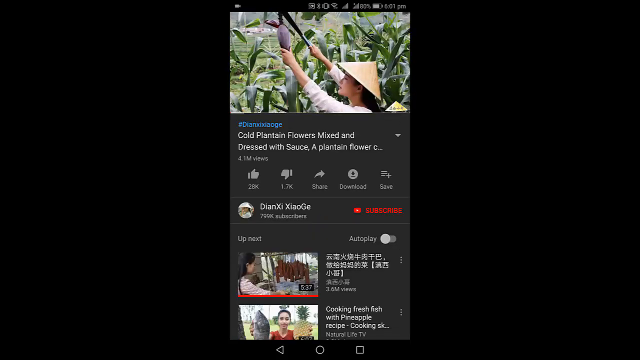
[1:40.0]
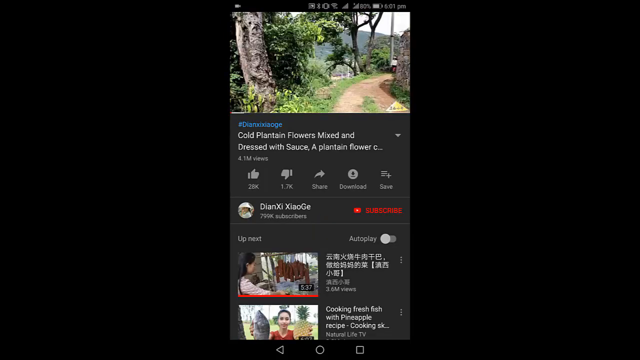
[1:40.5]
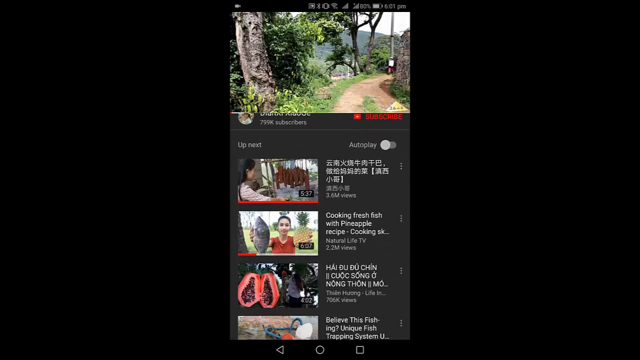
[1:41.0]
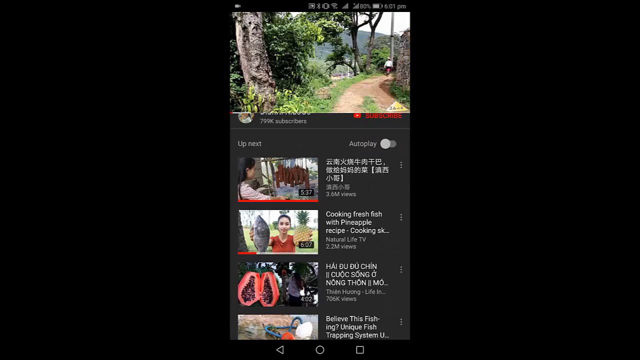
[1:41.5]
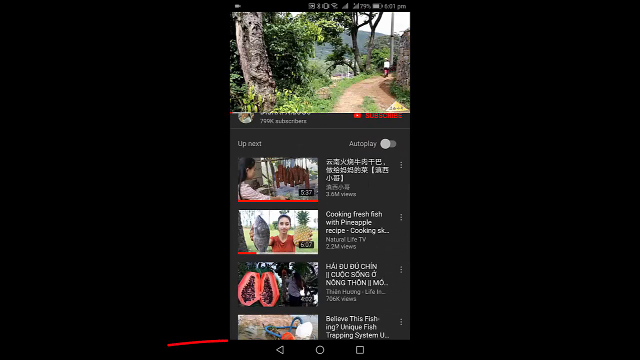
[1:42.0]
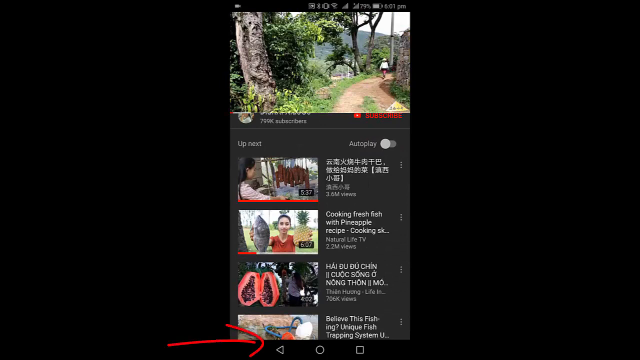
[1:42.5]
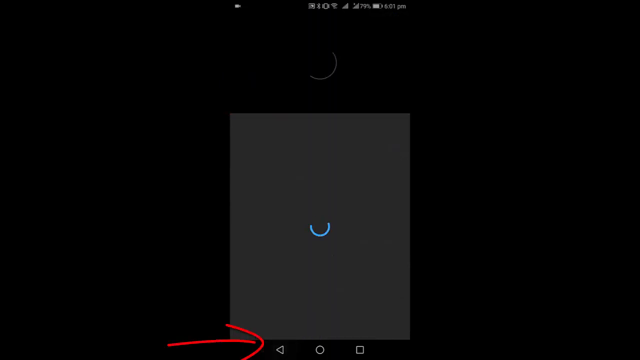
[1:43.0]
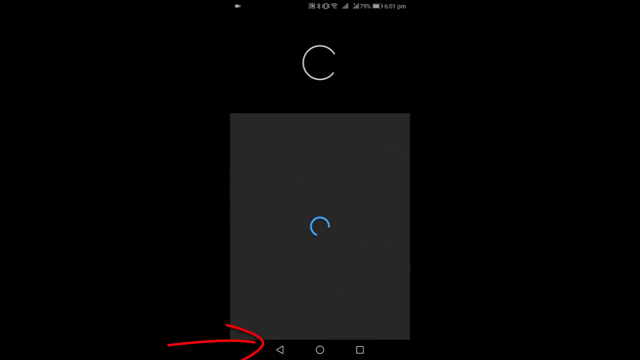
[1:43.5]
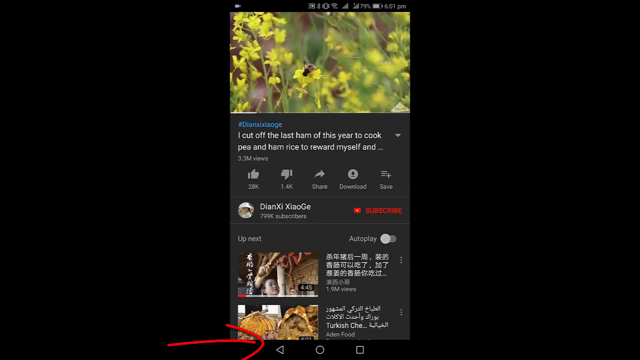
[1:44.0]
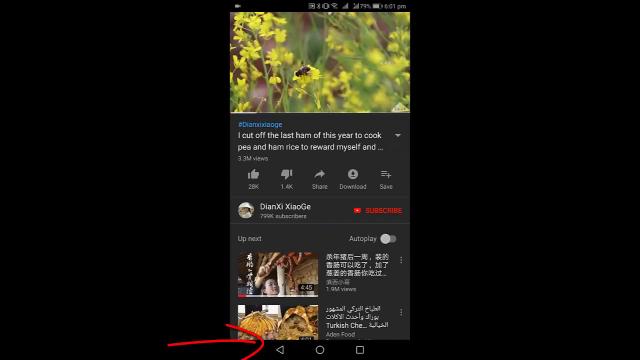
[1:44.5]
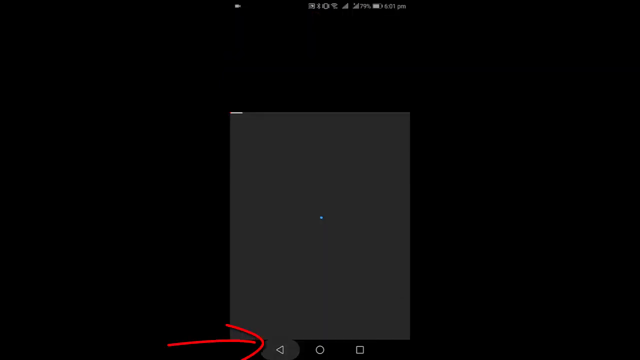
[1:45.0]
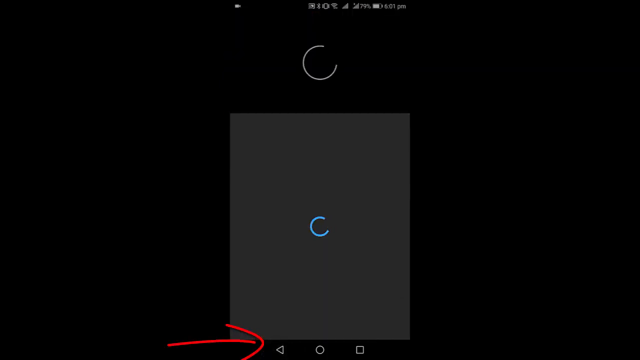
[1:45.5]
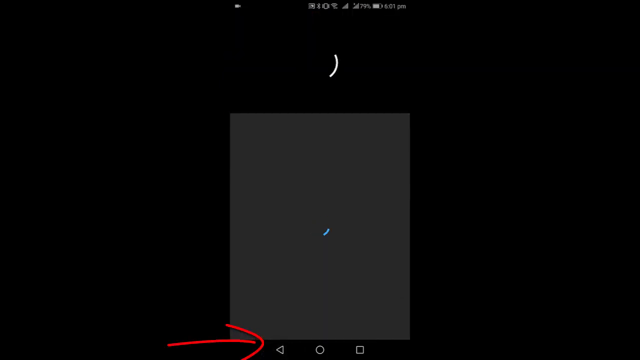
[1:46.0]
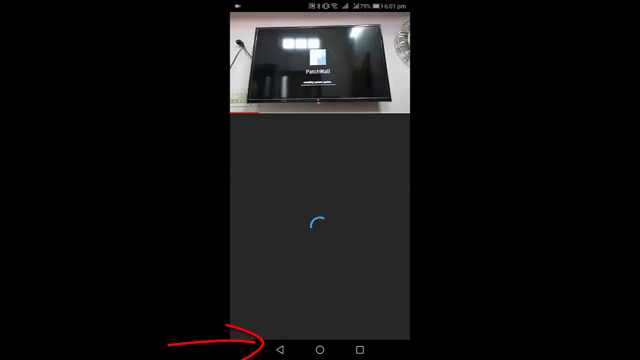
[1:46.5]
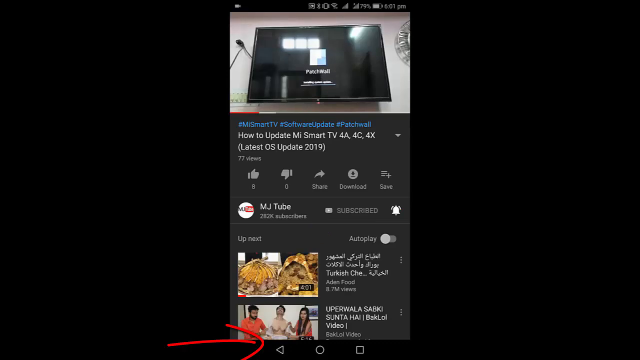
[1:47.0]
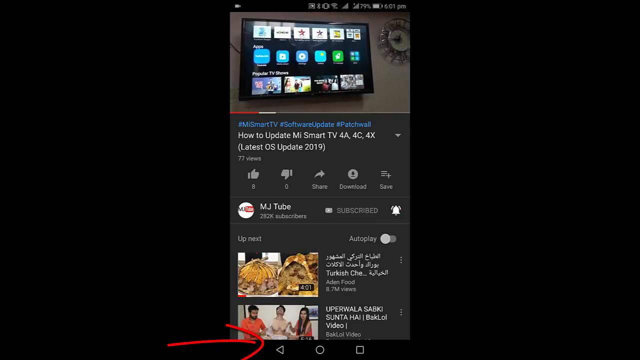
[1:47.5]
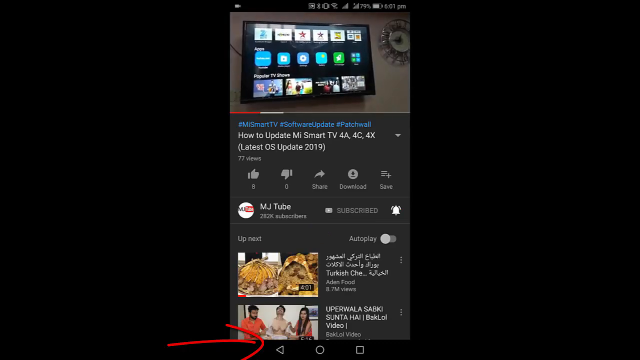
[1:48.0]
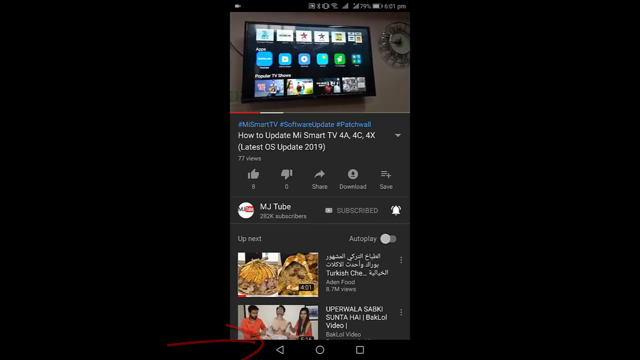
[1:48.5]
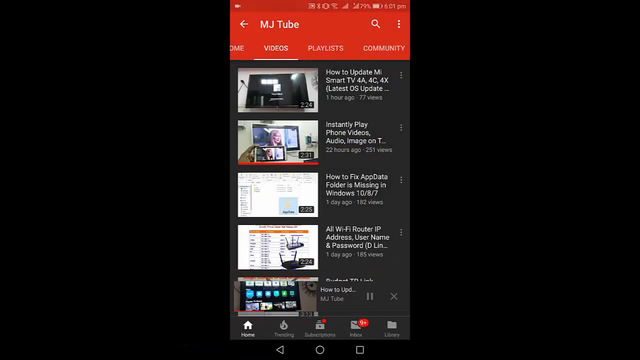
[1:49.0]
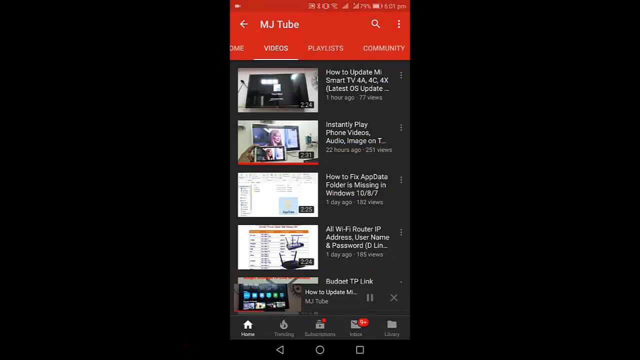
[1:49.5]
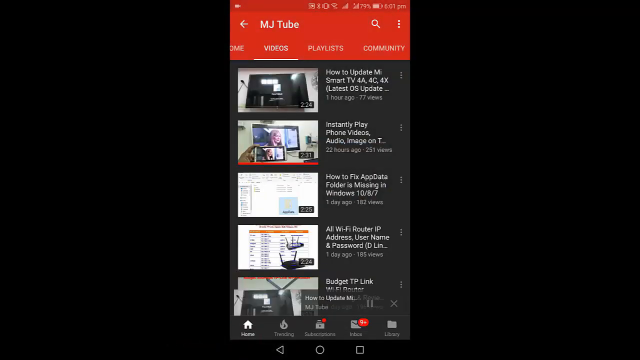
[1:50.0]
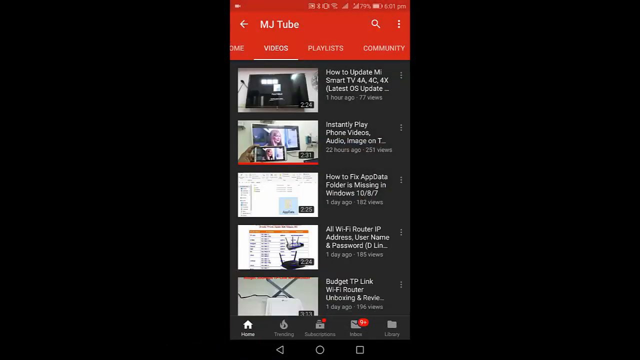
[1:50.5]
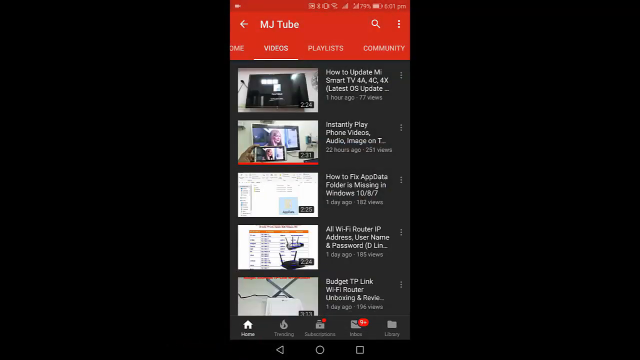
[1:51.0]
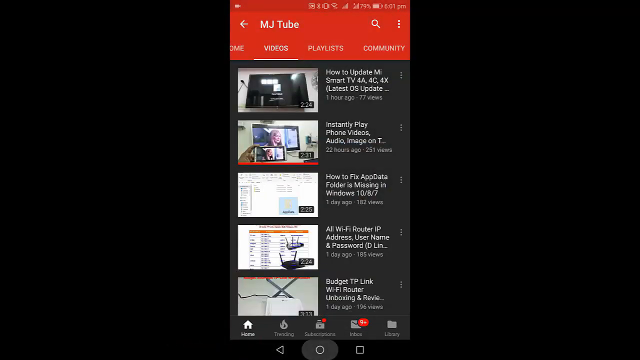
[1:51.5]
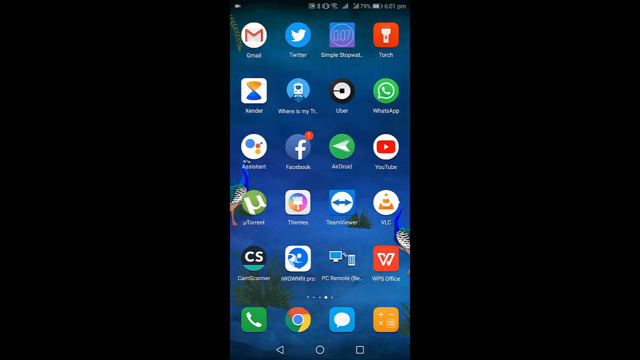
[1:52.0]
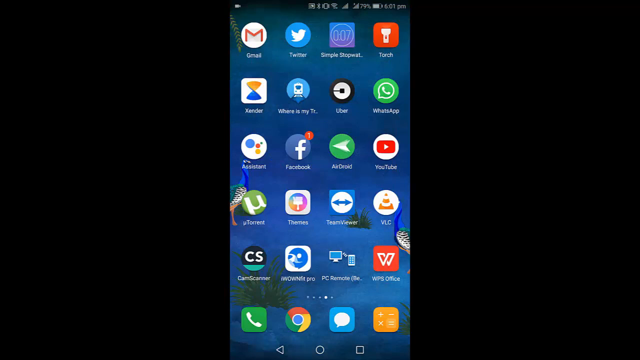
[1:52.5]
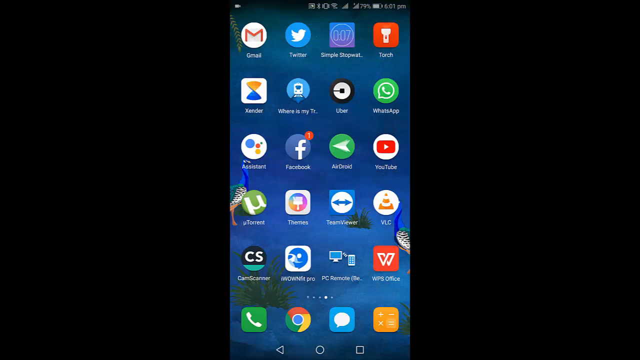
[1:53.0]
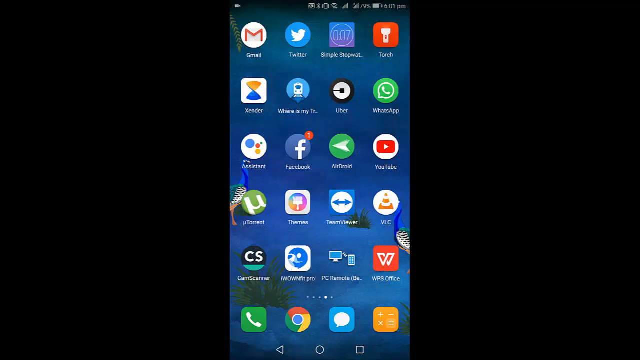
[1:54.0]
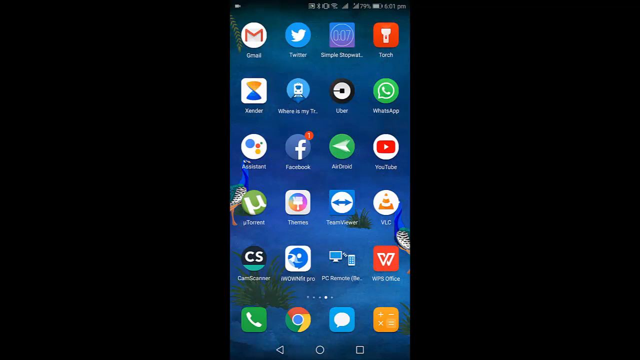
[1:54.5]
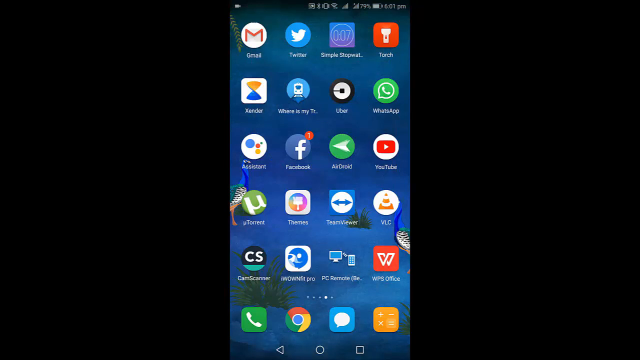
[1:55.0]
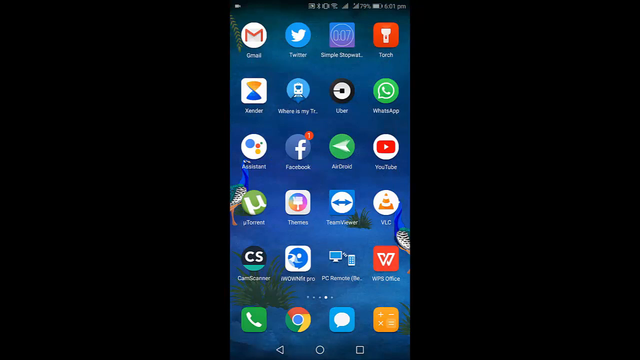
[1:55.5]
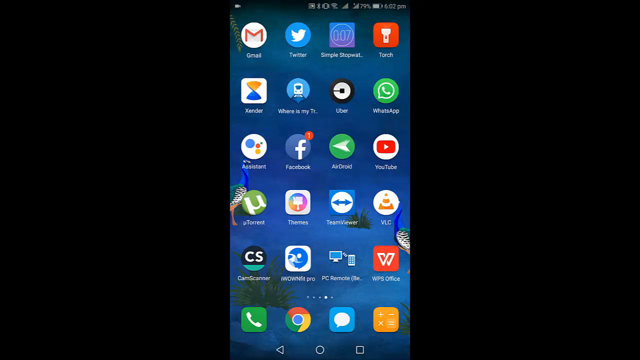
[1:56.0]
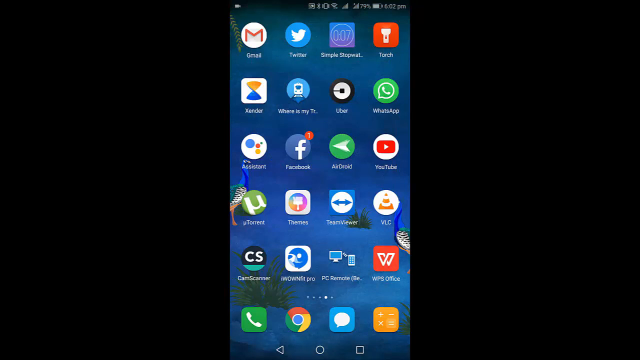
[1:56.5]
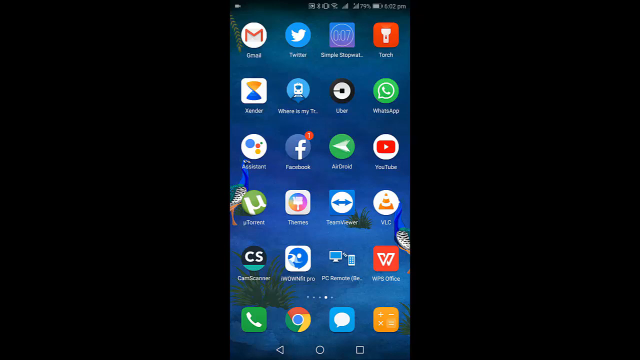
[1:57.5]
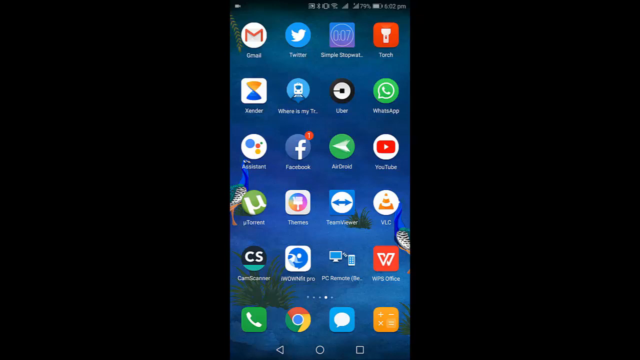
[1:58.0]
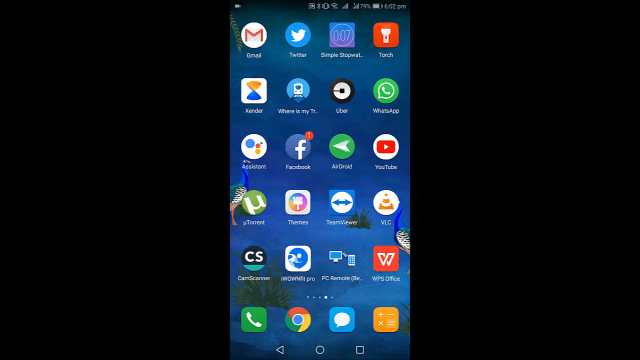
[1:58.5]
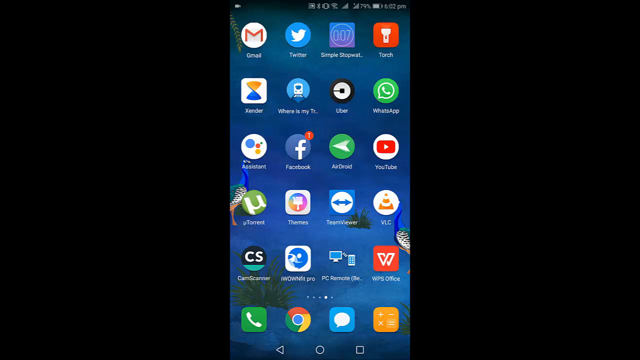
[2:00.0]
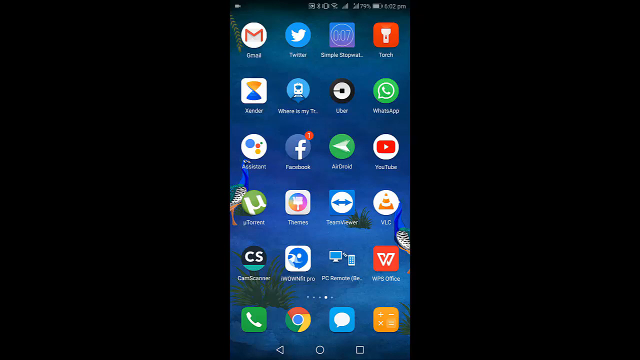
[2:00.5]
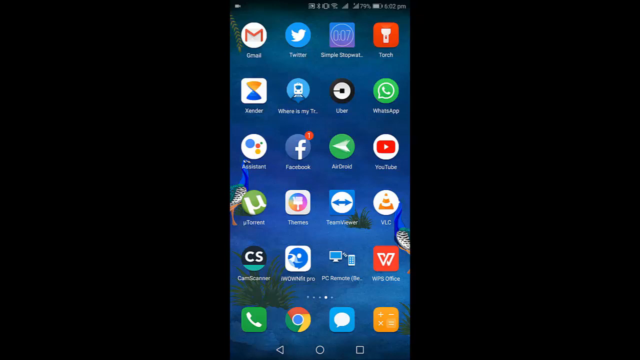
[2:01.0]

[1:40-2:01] Still on YouTube, it switches to a new video, "how to update Mi Smart TV 4A 4C4X latest OS update 2019", with 77 views, under the MJTube channel of the presenter. He moves the video to the very bottom, probably by sliding the screen down, revealing a list of MJTube's videos. He then presses the home button or something similar, returning to the home screen.